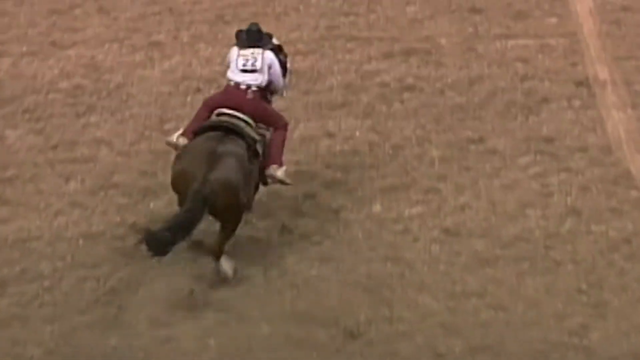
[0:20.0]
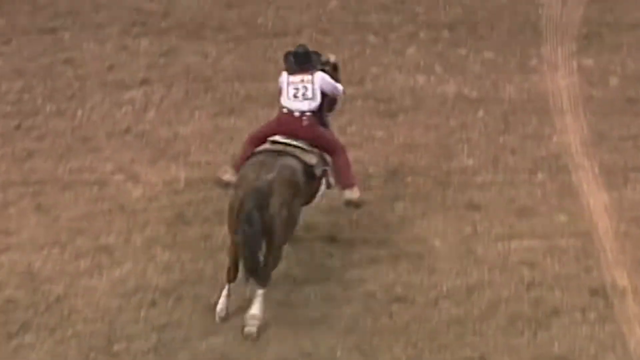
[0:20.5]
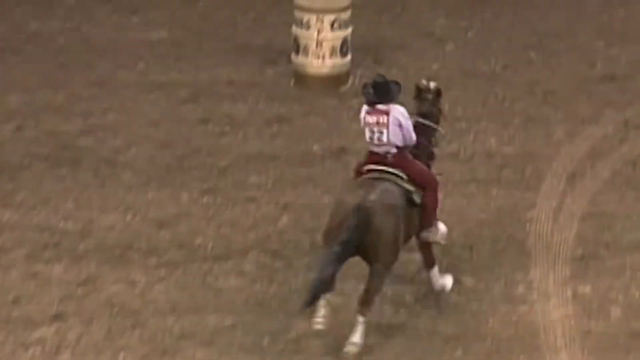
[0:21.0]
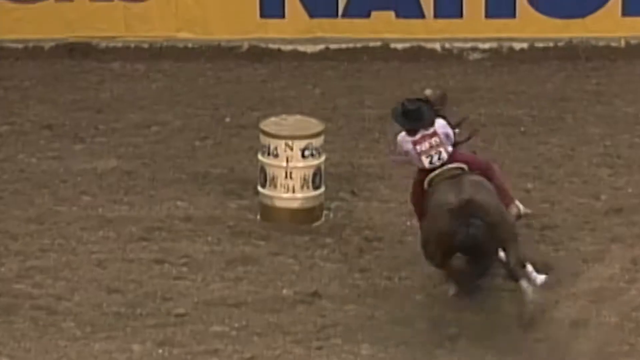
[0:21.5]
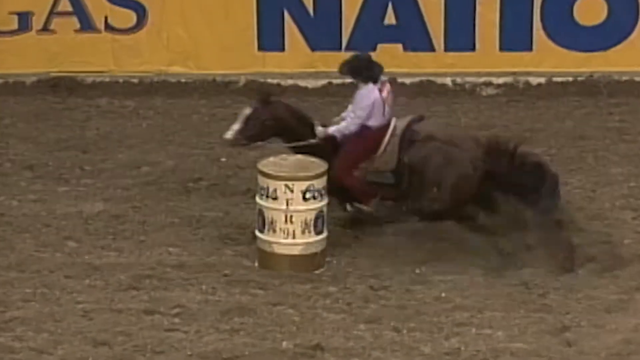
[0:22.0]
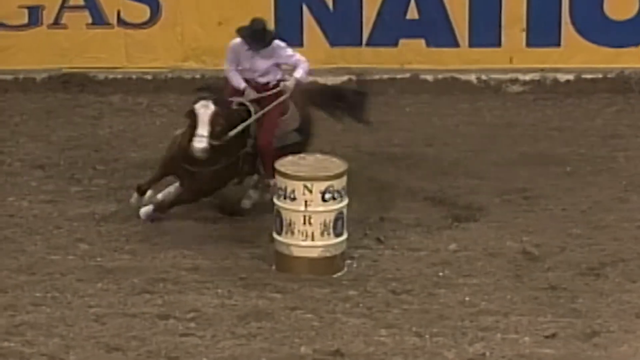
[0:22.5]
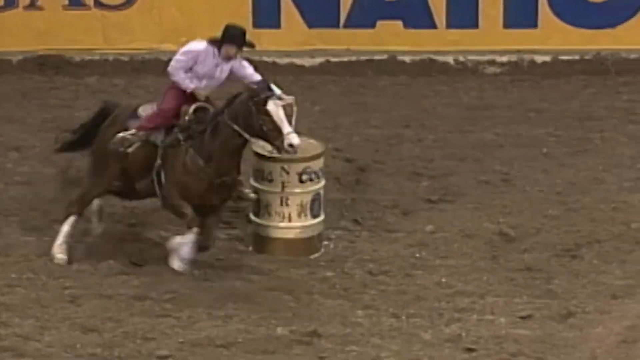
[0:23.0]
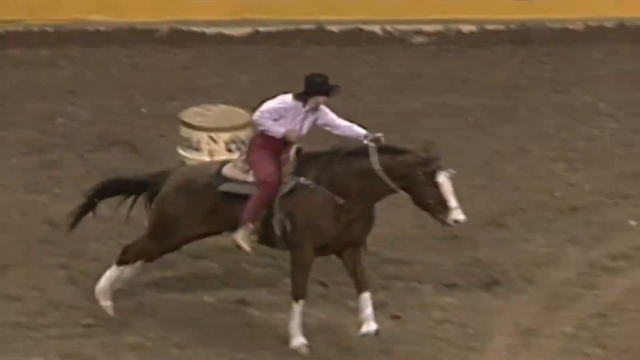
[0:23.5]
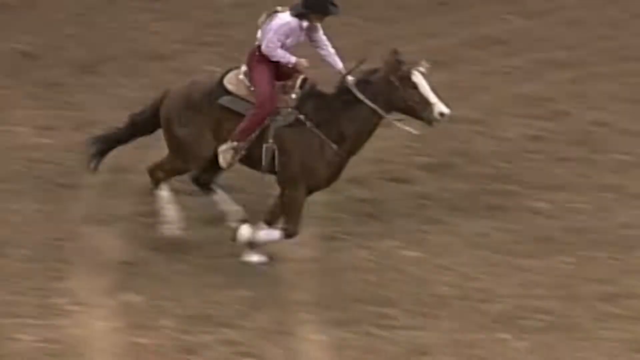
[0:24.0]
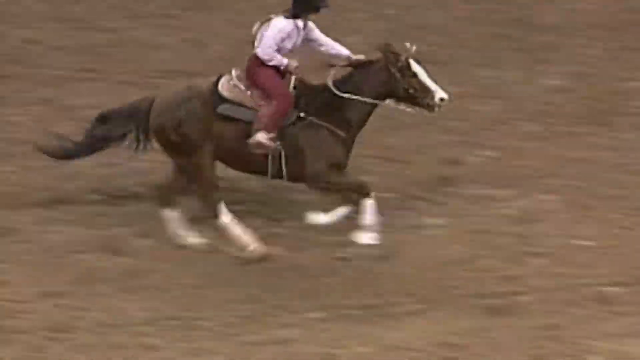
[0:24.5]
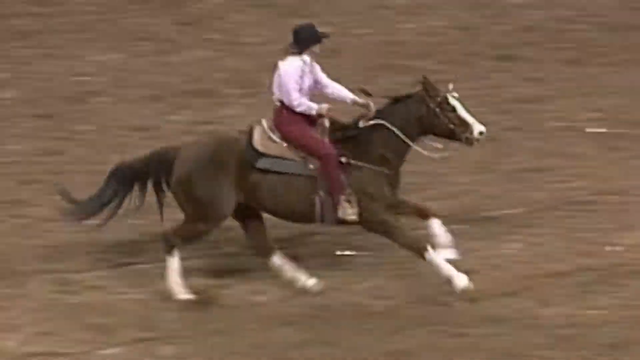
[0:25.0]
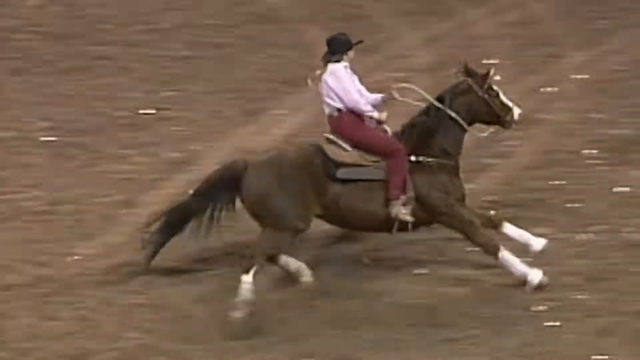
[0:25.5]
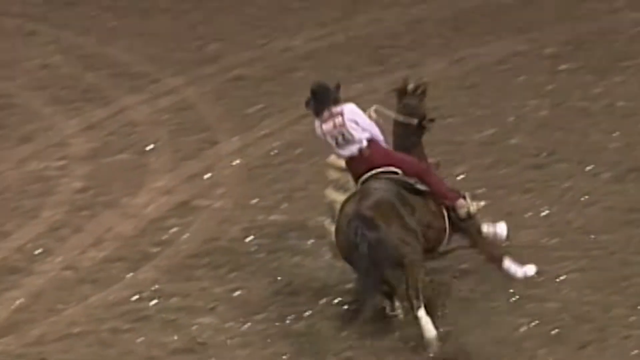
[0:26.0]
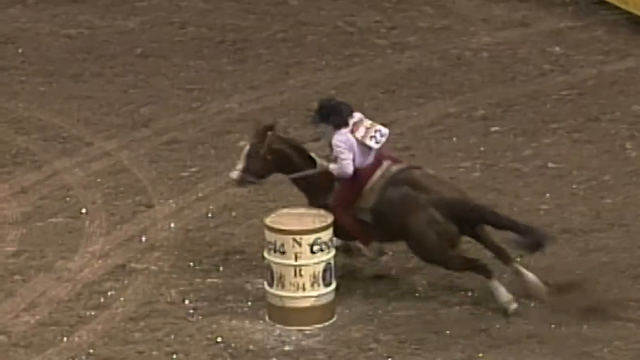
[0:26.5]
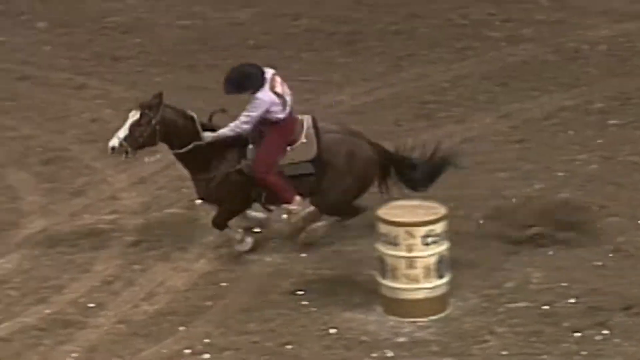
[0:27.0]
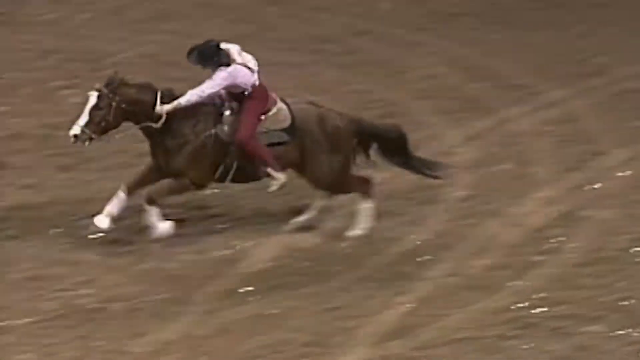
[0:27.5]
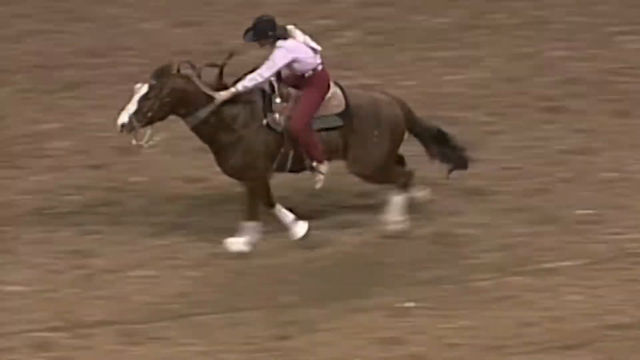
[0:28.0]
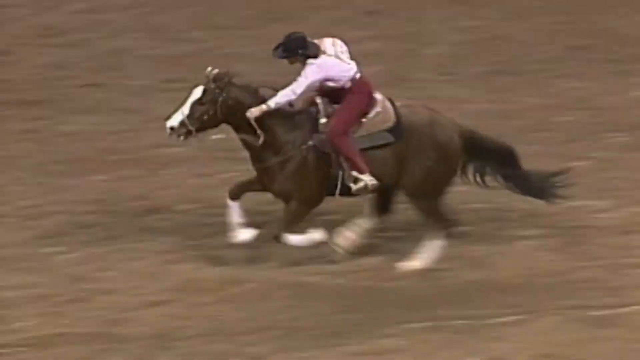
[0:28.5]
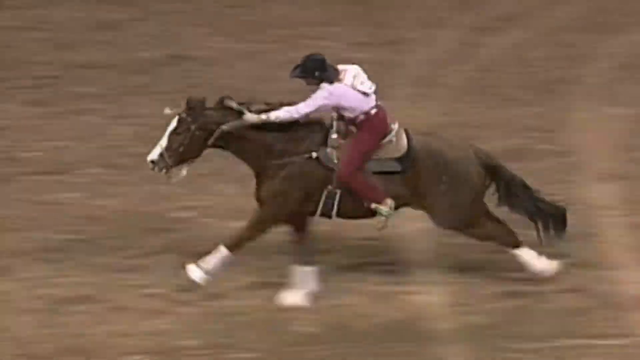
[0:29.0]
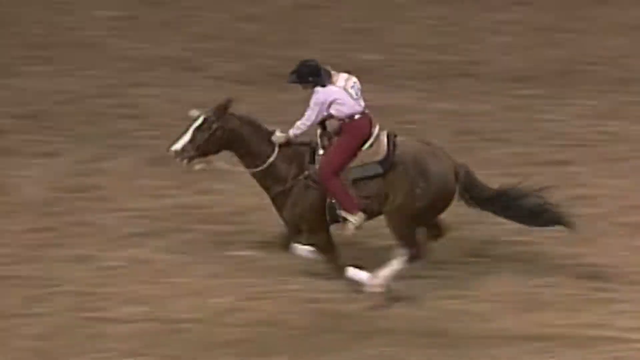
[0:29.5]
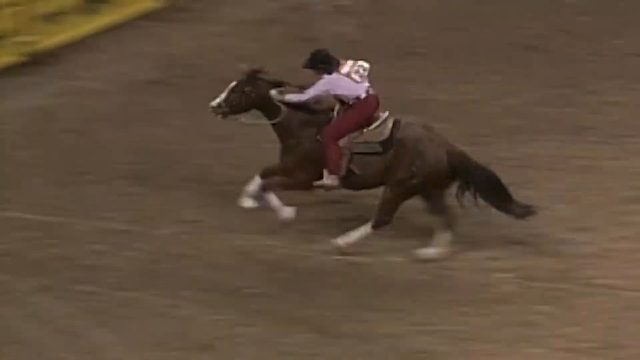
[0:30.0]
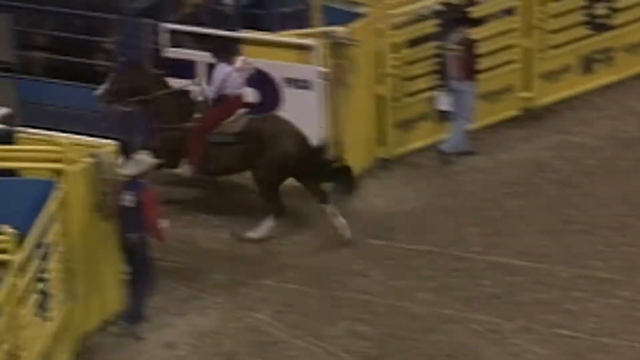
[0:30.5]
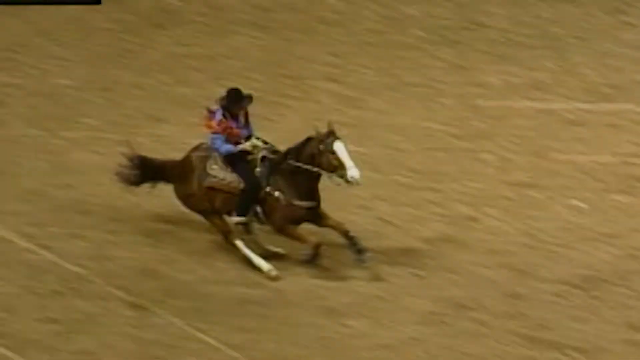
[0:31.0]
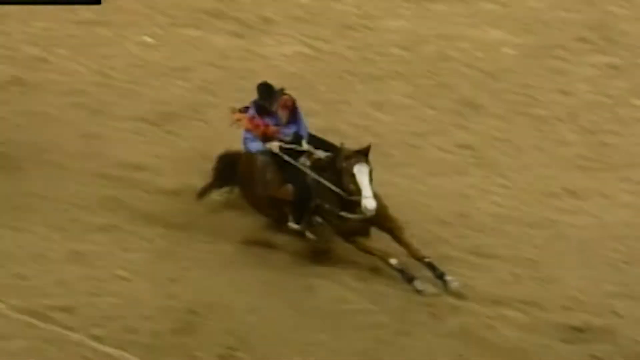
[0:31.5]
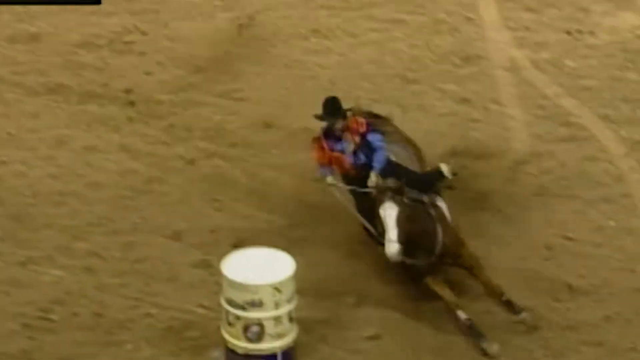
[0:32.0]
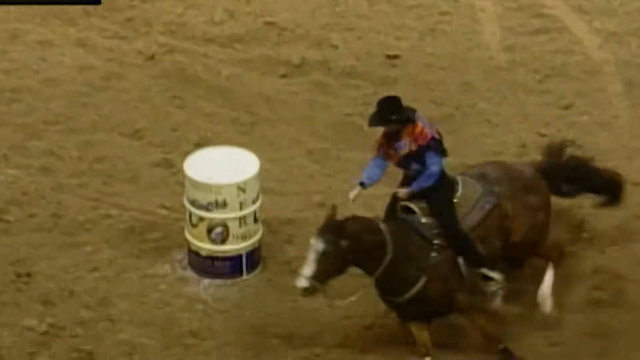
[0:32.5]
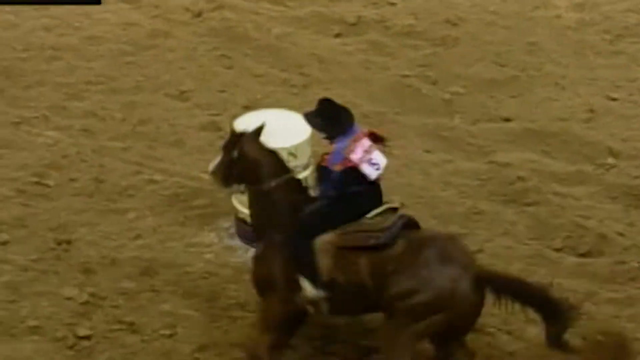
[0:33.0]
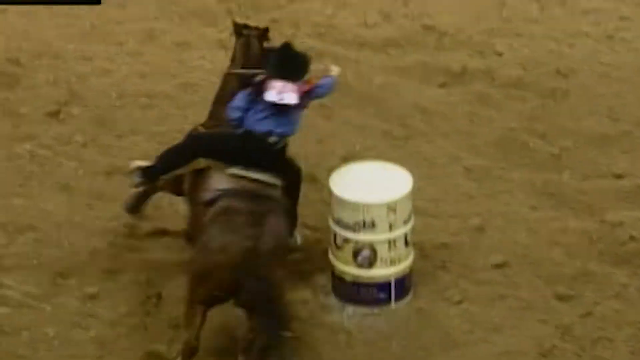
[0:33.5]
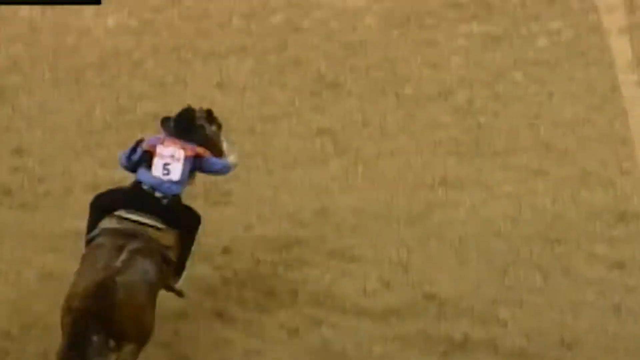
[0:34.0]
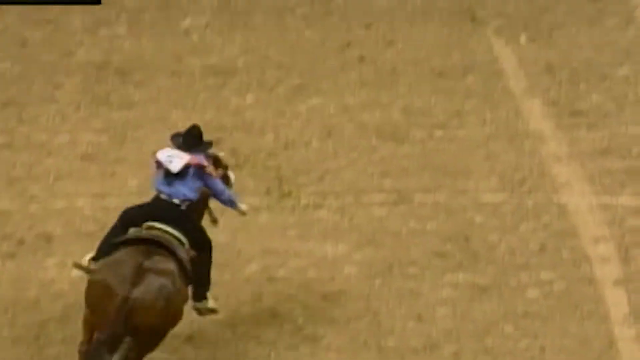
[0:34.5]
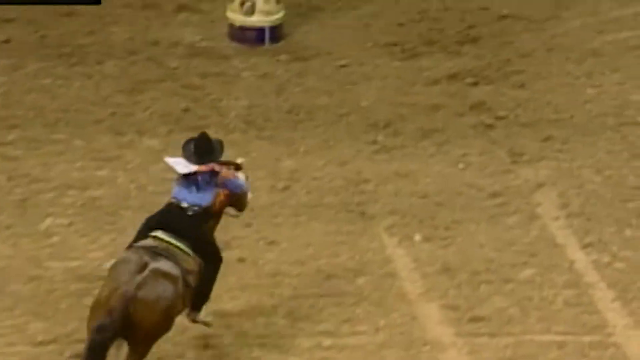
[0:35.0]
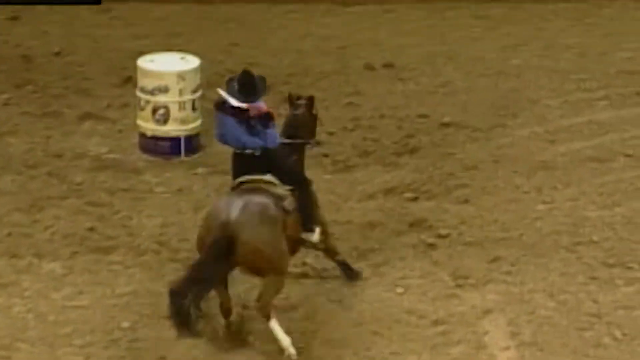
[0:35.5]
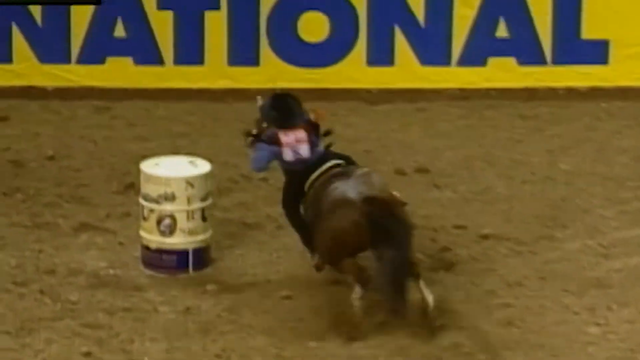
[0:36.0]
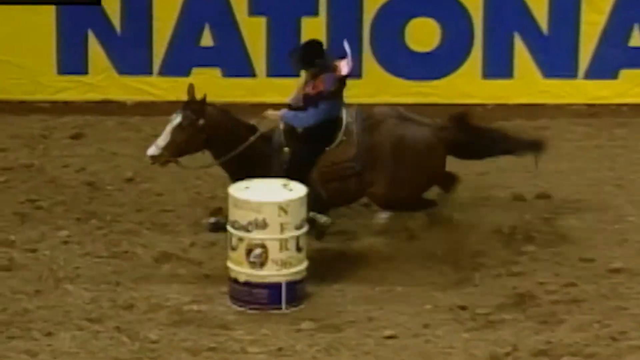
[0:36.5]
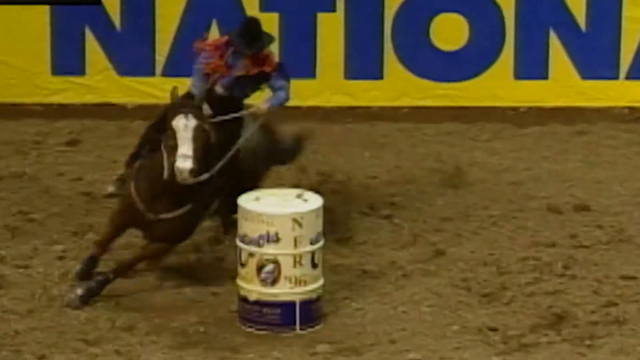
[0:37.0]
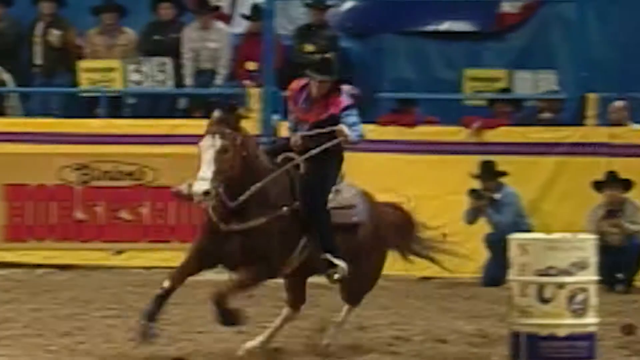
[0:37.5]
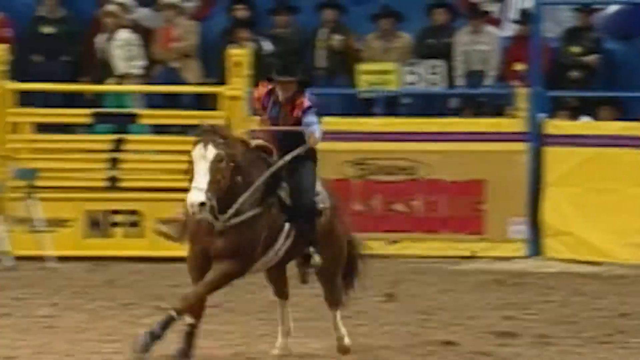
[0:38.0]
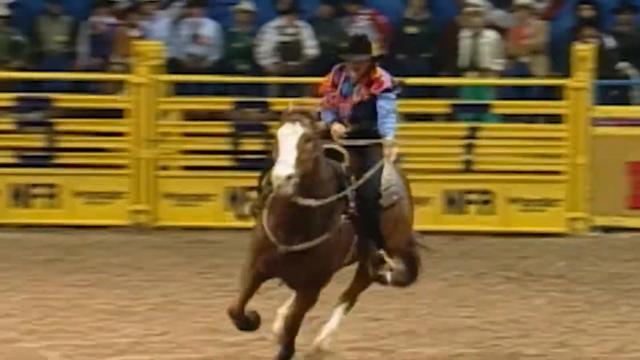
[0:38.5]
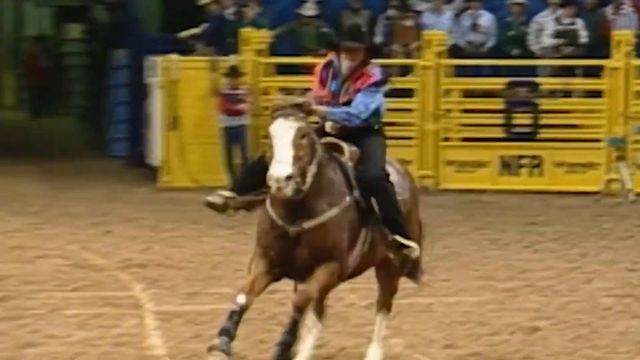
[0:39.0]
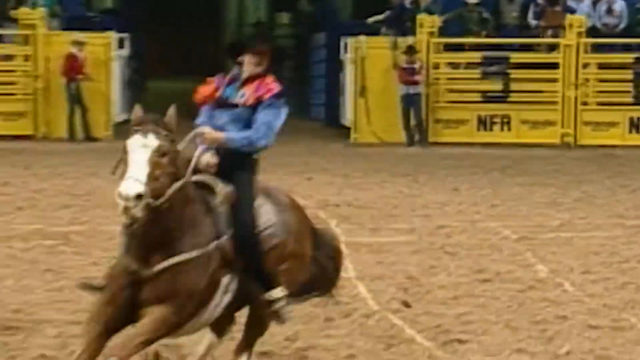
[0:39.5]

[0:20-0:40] The backside of a brown horse is shown, with a woman sitting on top wearing a pink shirt, maroon pants and a black hat, leaning forward as the horse gallops fairly quickly. She has the number 22 on her back. The horse approaches the right side of a barrel of beer, makes a full 360 turn around it, and heads to the right of the screen. The woman has her left hand on a rope connected to the horse's face and her right hand on the front of the saddle. The horse then comes from the right side of another barrel, goes all the way around it, and heads to the left of the screen with the woman still on top, then runs through the gate. The picture changes to a different rodeo, where a woman, who might be the same woman, rides a horse wearing a blue shirt with a red design around the shoulders, black pants and a black hat. Based on the shape of its head and the white patch on its head, it seems to be the same horse. This time the horse goes from the left side of the barrel around to the other side, comes from the right side, and goes straight forward toward another barrel, goes around it from the right side, and starts running to the right. The camera changes angles so the horse is running toward the camera, and it starts to go around another barrel.